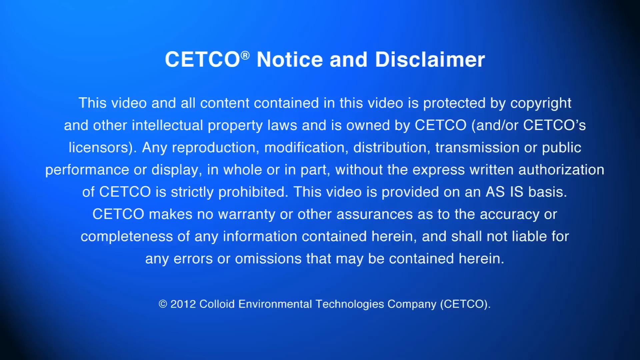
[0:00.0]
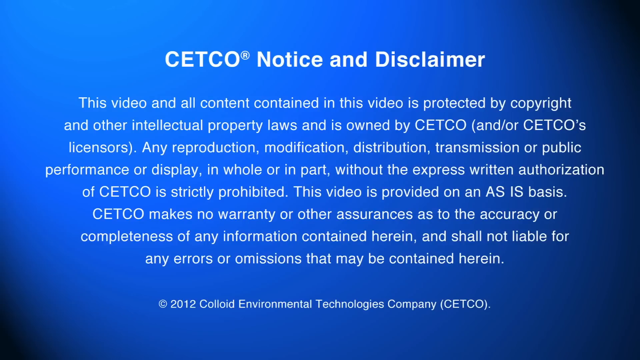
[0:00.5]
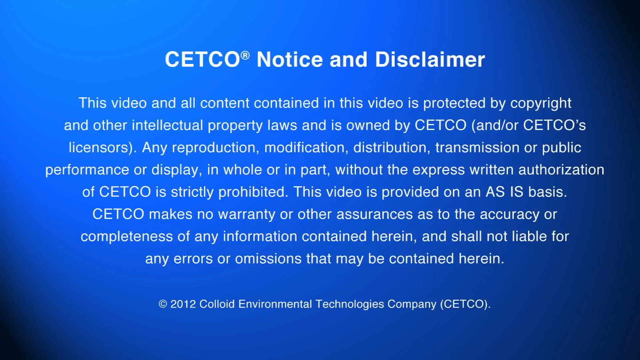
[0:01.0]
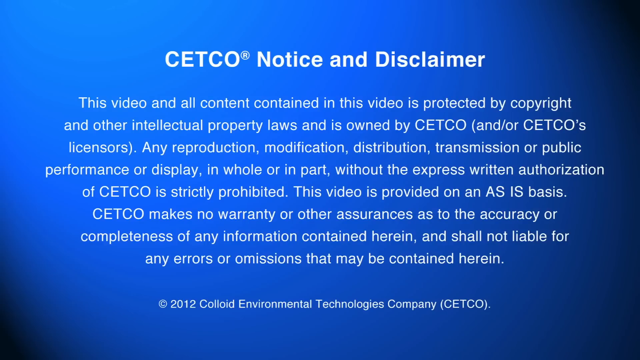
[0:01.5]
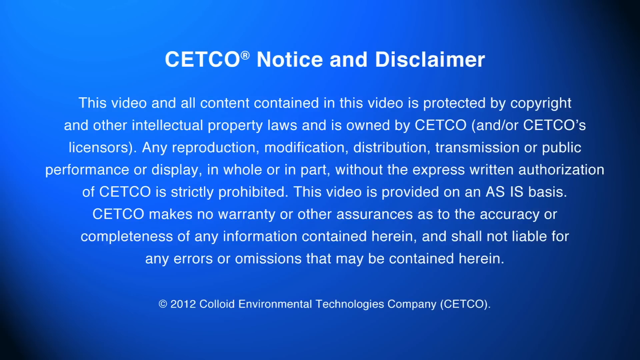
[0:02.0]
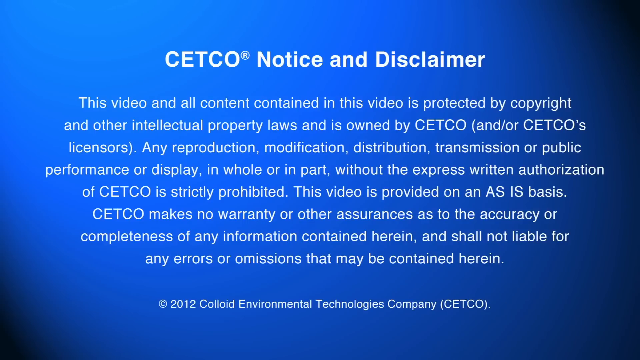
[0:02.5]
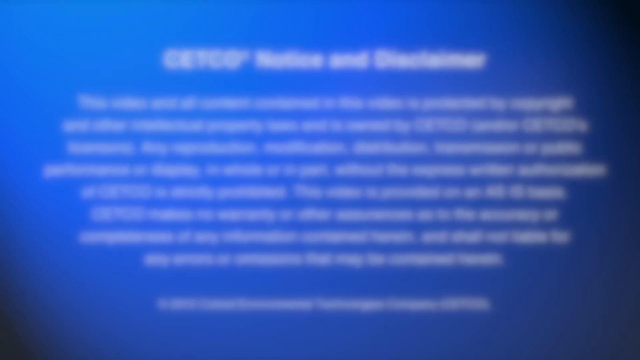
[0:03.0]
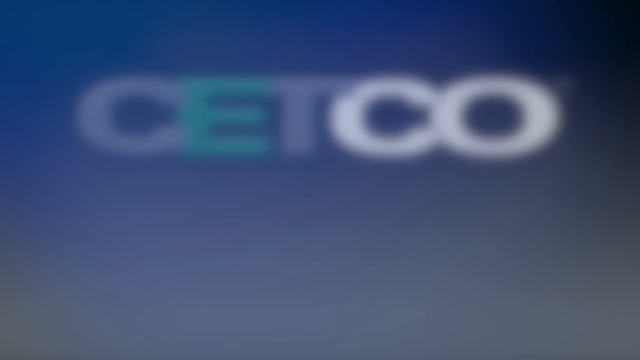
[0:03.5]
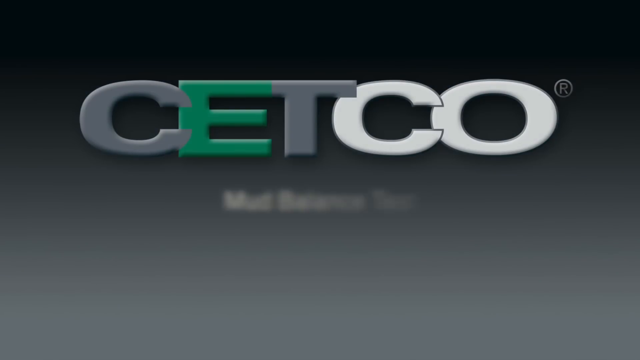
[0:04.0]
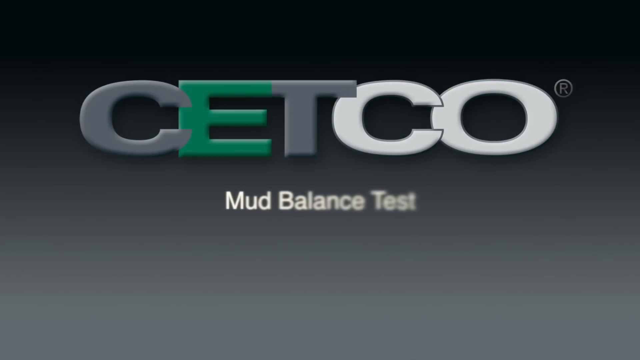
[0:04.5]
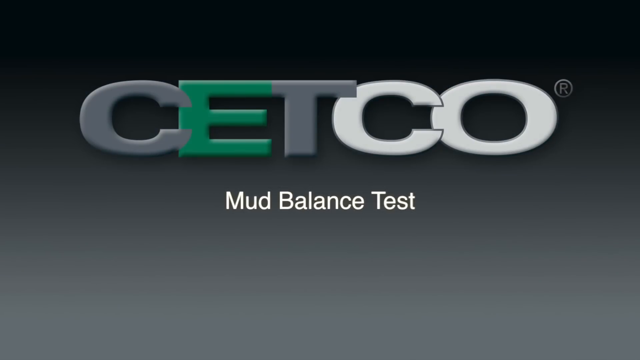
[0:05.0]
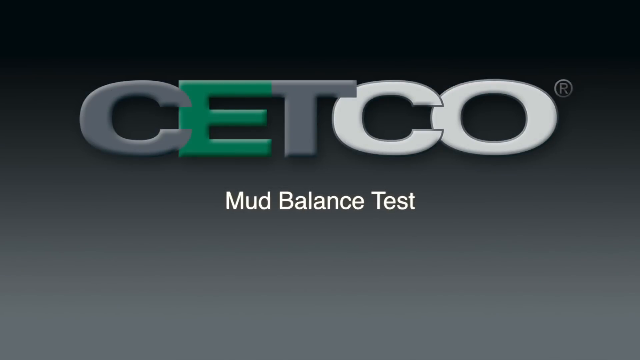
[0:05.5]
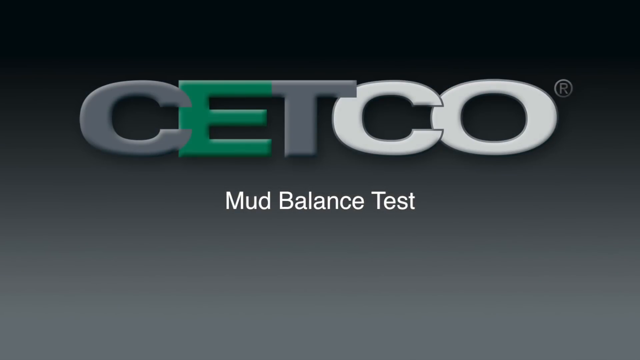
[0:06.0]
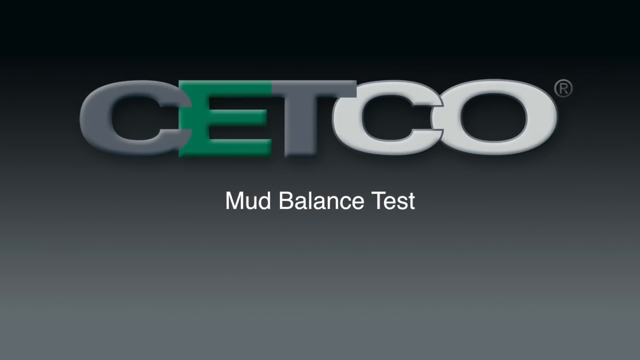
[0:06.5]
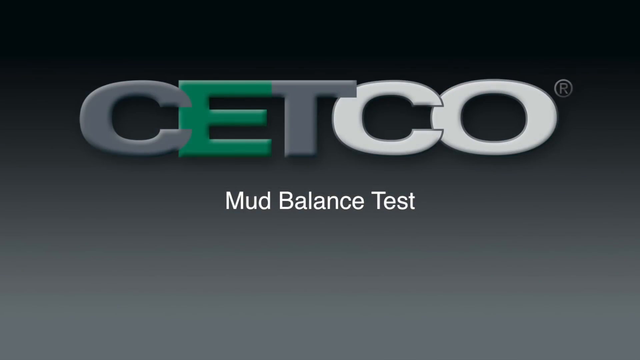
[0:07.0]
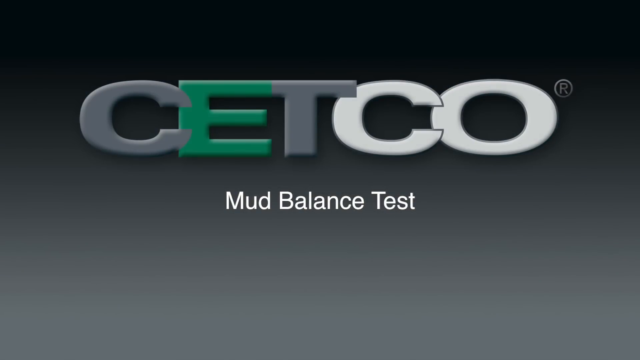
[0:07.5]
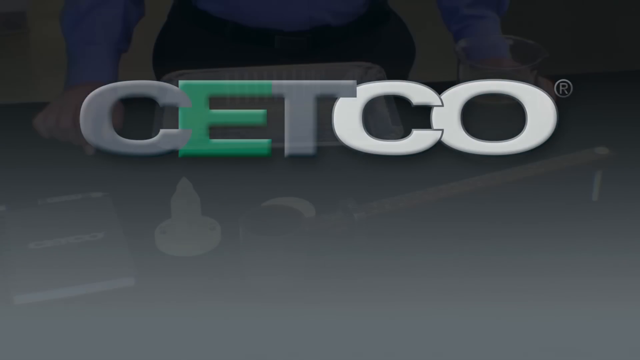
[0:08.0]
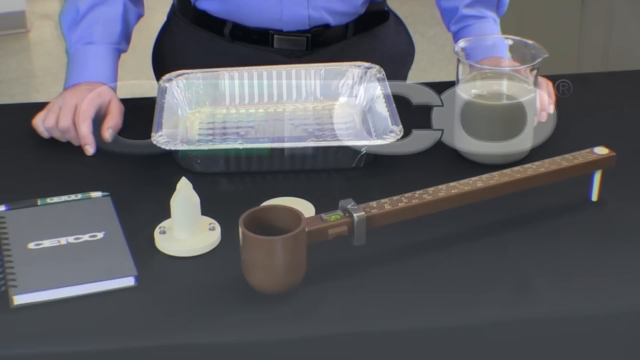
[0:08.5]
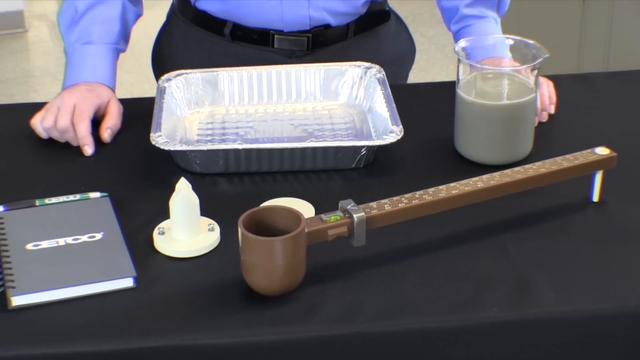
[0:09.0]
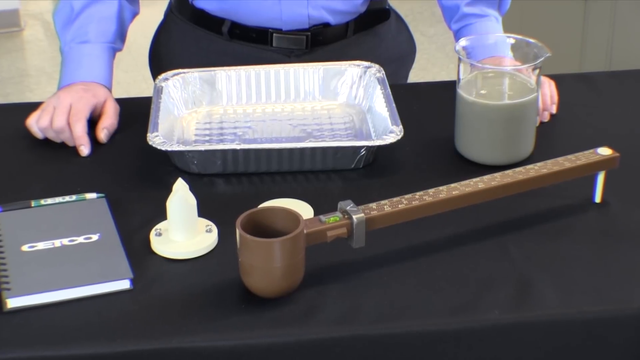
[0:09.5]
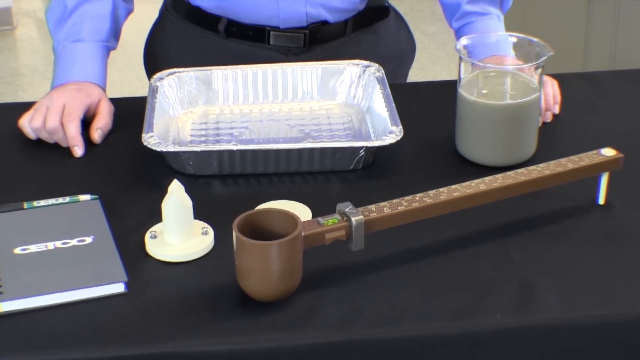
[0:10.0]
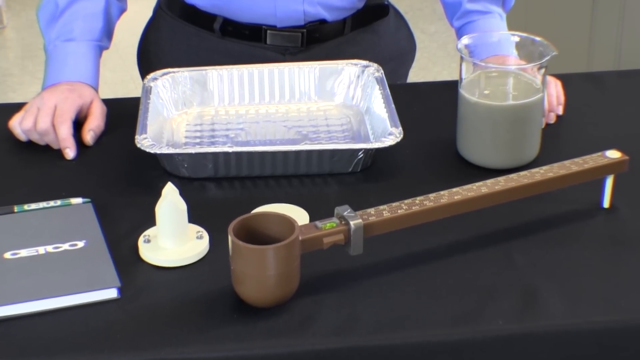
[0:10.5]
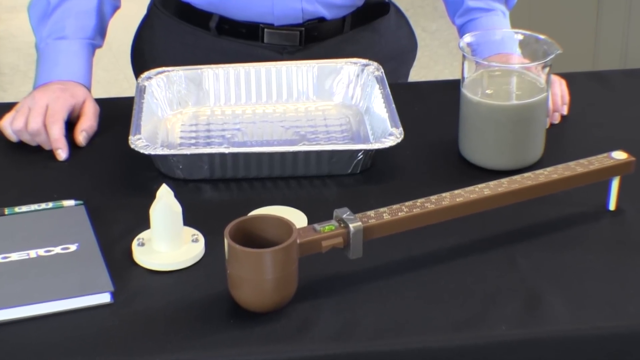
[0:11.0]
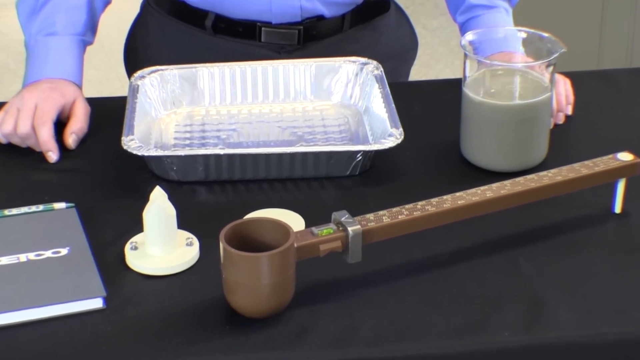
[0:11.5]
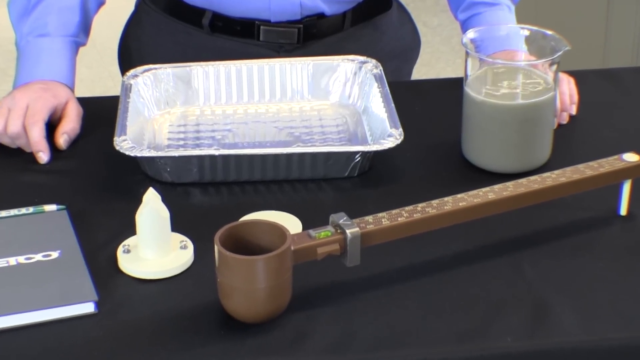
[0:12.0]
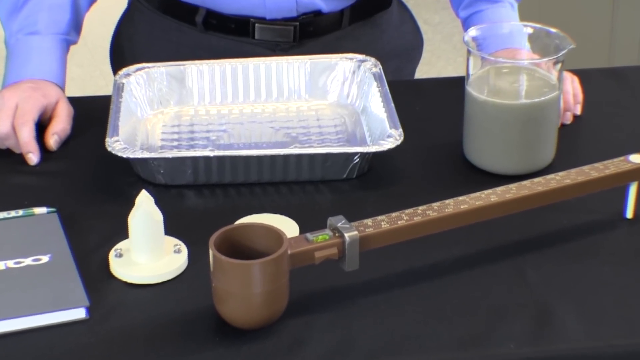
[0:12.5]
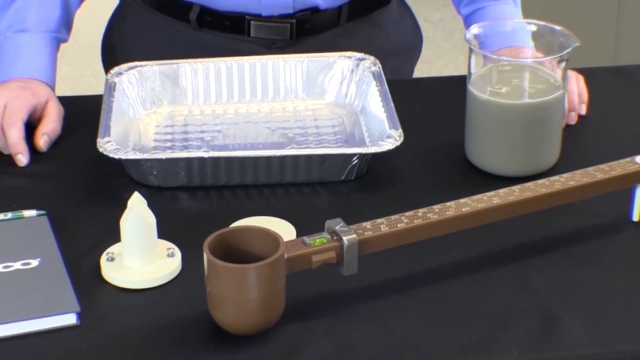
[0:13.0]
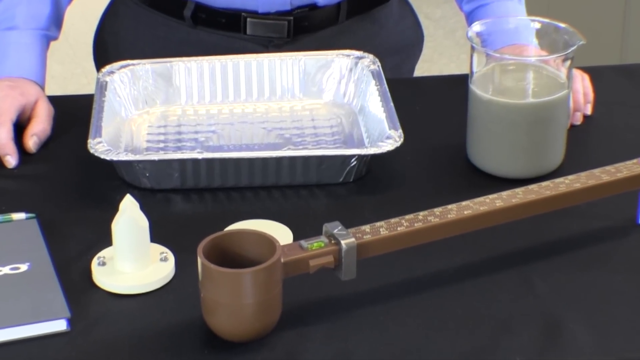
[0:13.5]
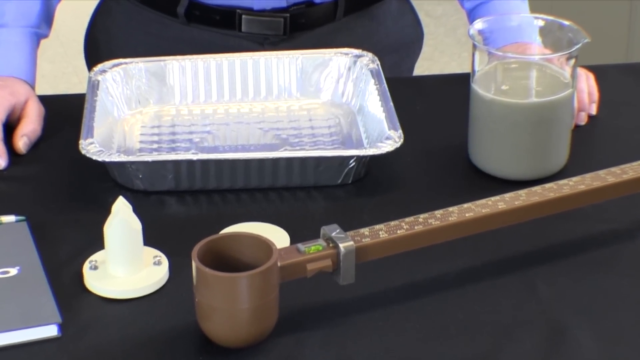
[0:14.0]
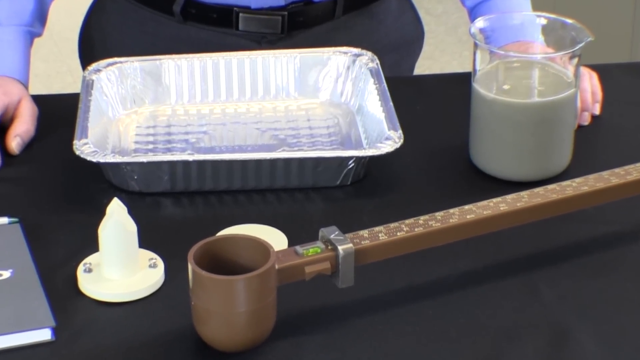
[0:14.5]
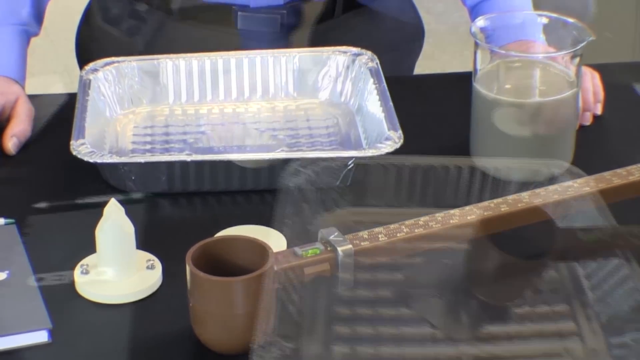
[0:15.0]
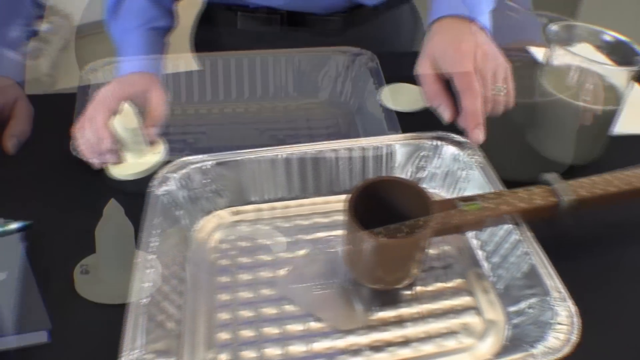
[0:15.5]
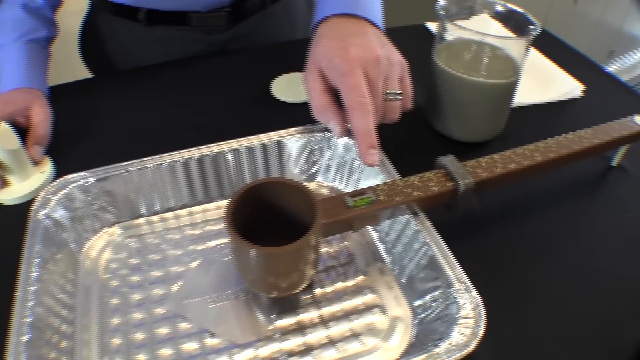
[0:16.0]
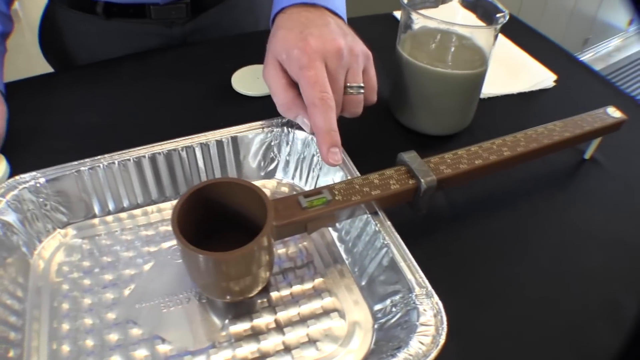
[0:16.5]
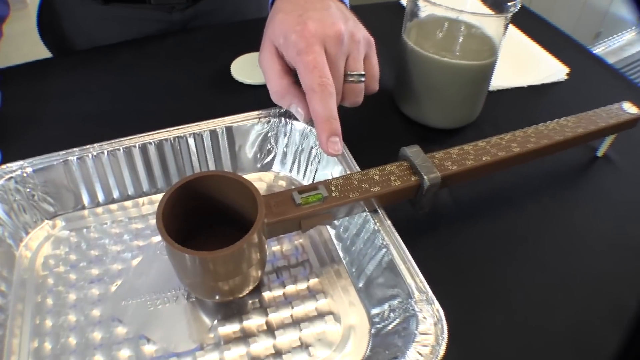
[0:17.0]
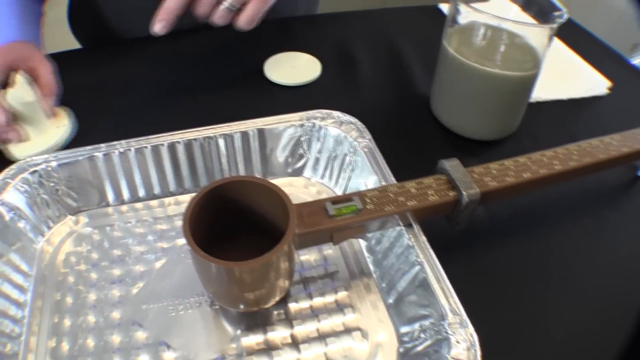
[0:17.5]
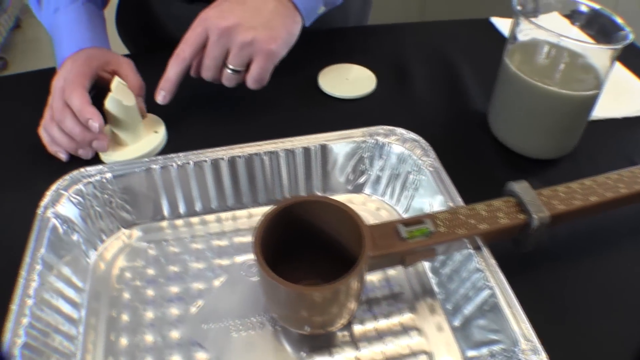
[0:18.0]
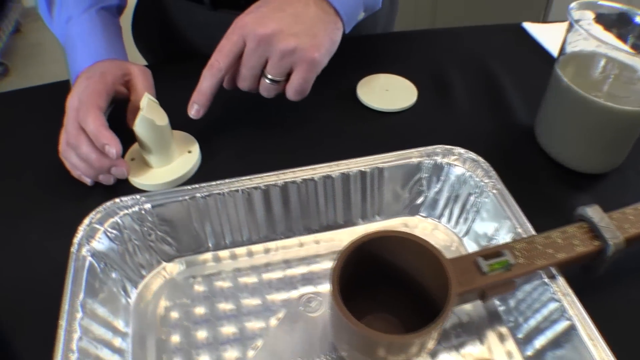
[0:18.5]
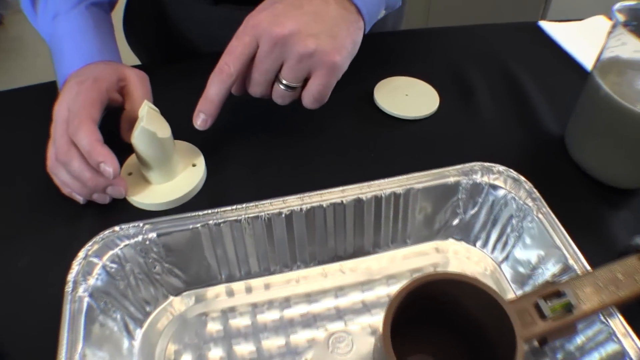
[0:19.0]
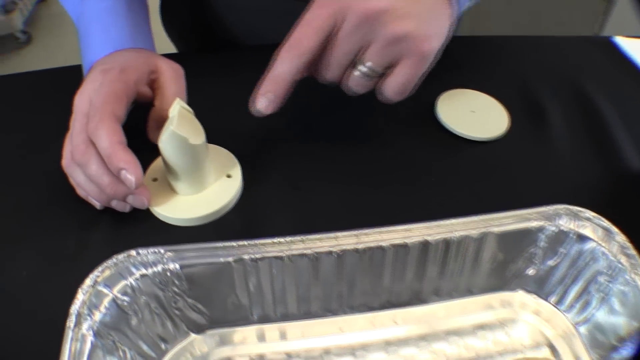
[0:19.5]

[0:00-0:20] A notice and disclaimer screen appears, all in white text on a blue background. It reads "CETCO notice and disclaimer", followed by some sort of disclaimer about the video. This fades into a second screen showing the company name CETCO: the E is green, the first C and the T are gray, and the CO is white. There is also a copyright mark on it. Below the name, in much smaller font, it says "Mud balance test". Live footage follows of someone in a blue shirt and gray pants wearing a black belt. In front of him is a counter with a black countertop. On the countertop are a beaker holding some sort of water solution that looks like mud, and an aluminum tray. There is also a brown measurement item with a cup at the end; a square rod sticks out of the cup, with a white pin at the end of the rod that keeps it level. A couple of other unidentified white plastic items are there as well, along with a CETCO notebook and a green pen with the CETCO logo.